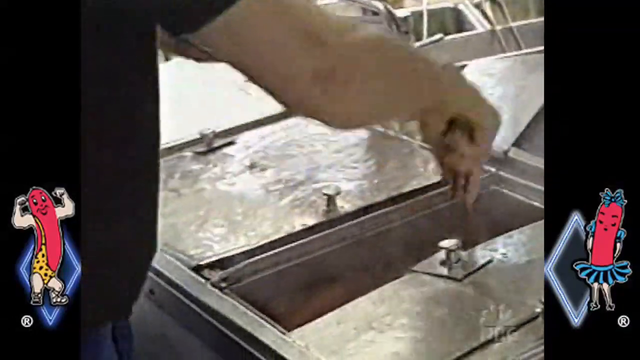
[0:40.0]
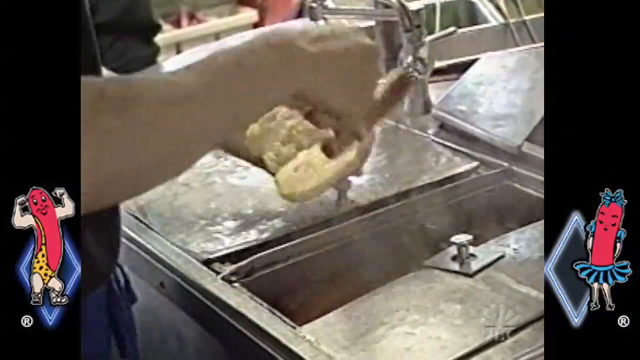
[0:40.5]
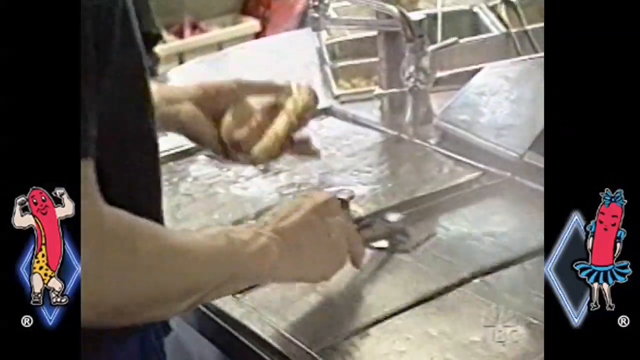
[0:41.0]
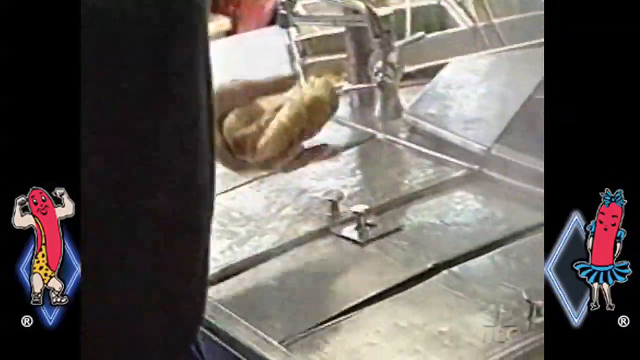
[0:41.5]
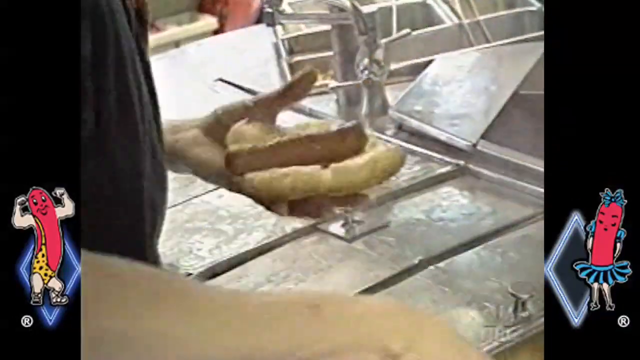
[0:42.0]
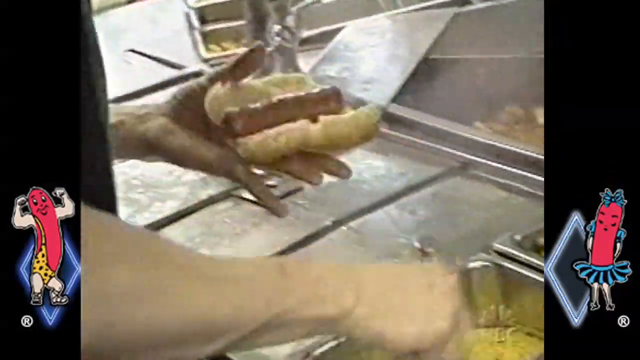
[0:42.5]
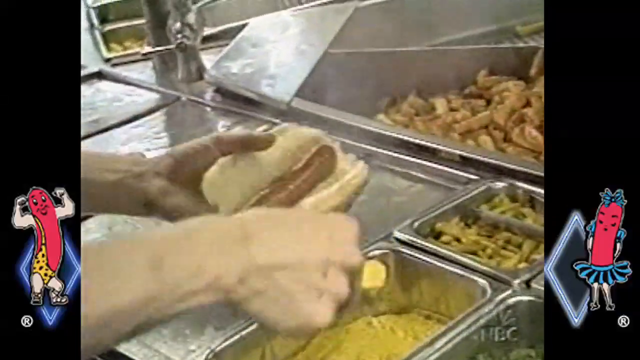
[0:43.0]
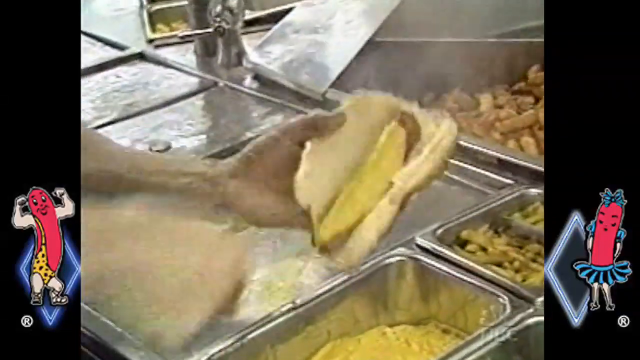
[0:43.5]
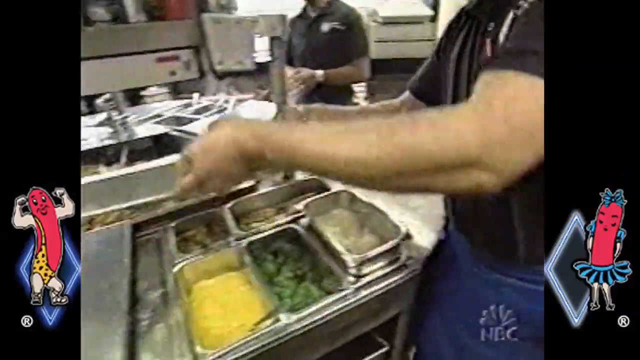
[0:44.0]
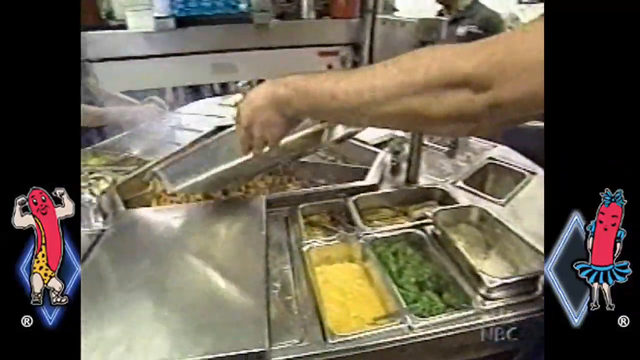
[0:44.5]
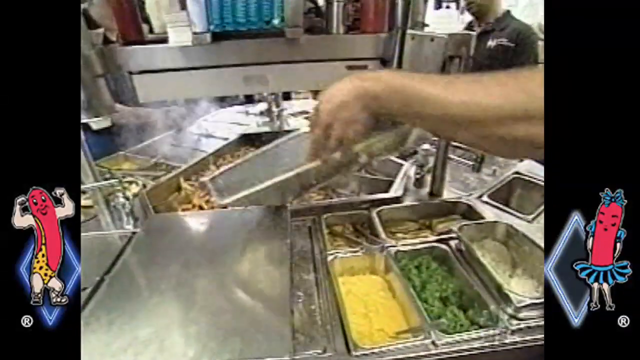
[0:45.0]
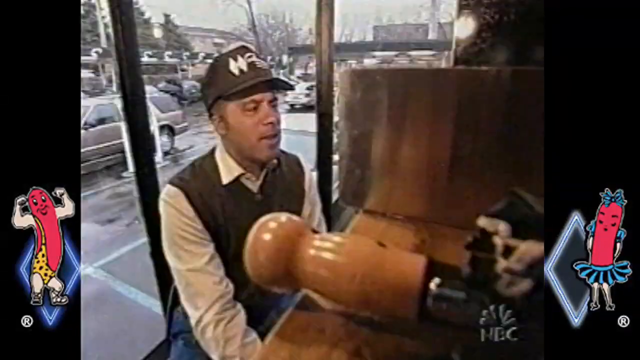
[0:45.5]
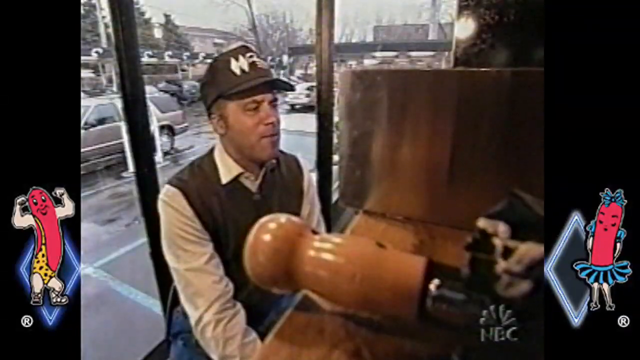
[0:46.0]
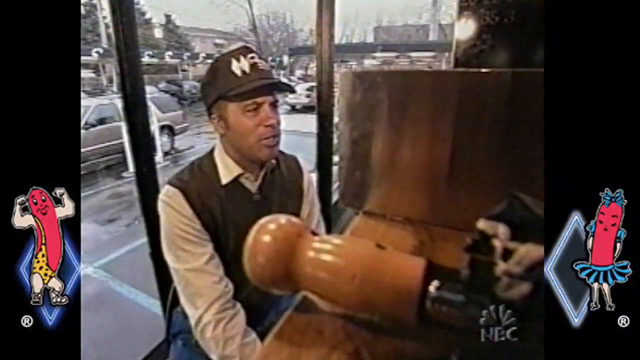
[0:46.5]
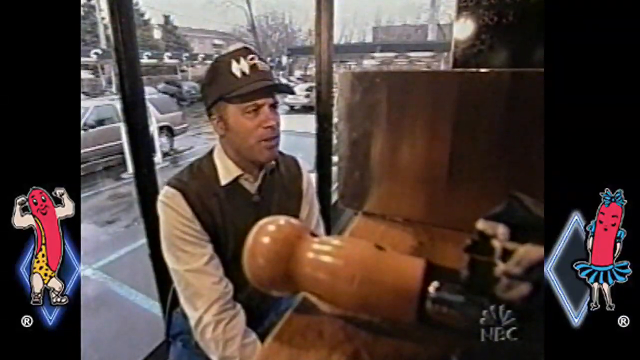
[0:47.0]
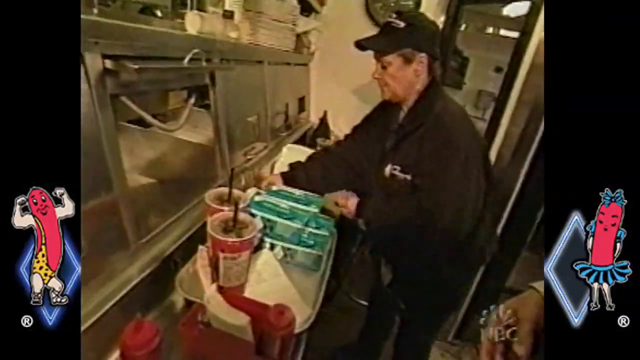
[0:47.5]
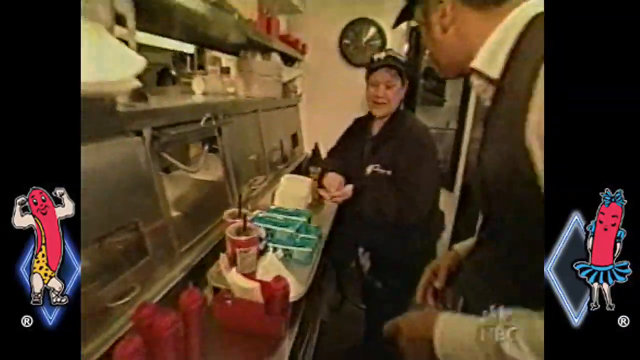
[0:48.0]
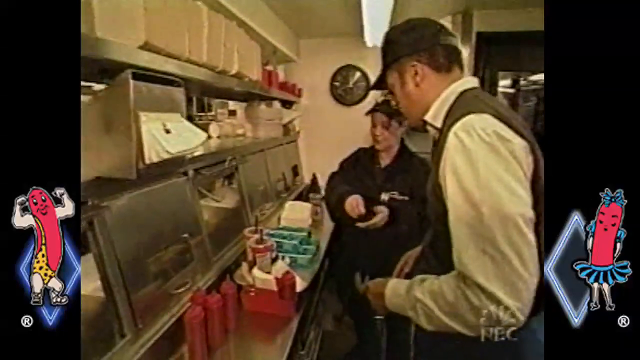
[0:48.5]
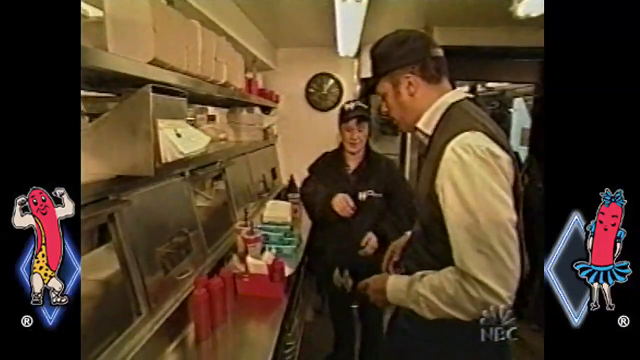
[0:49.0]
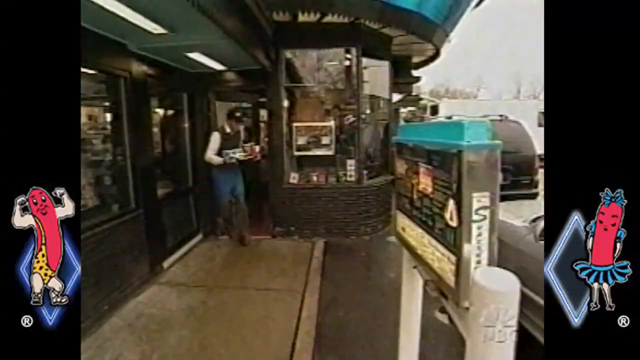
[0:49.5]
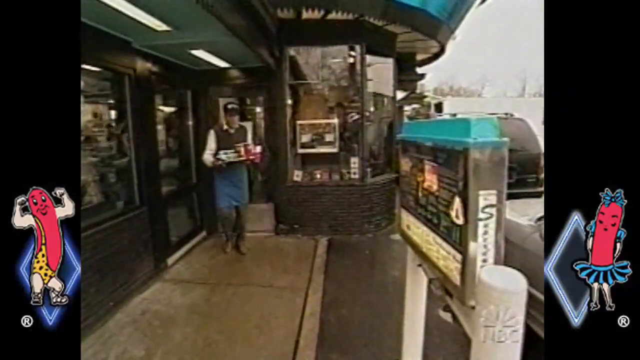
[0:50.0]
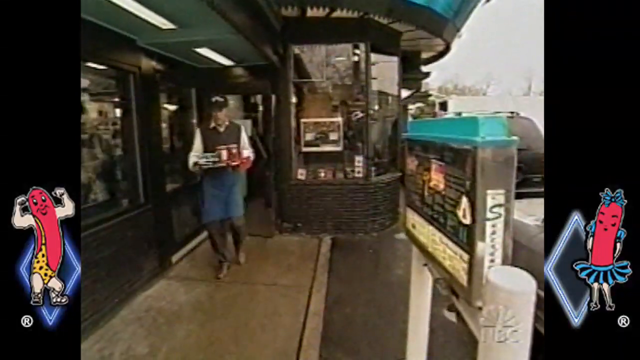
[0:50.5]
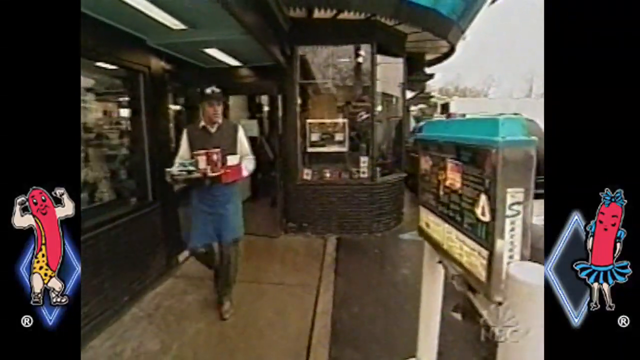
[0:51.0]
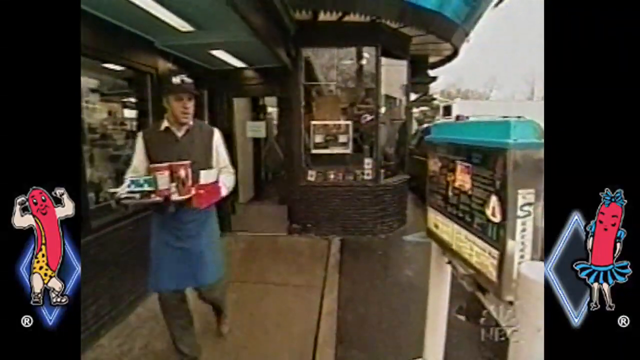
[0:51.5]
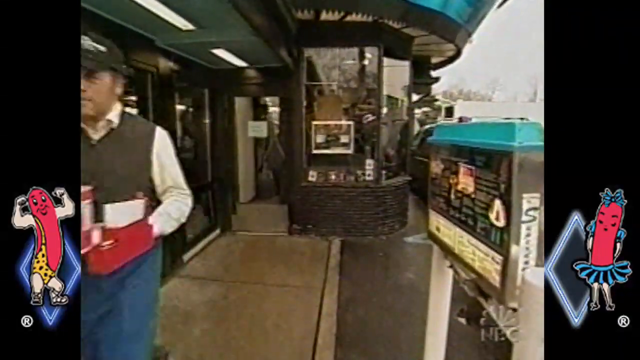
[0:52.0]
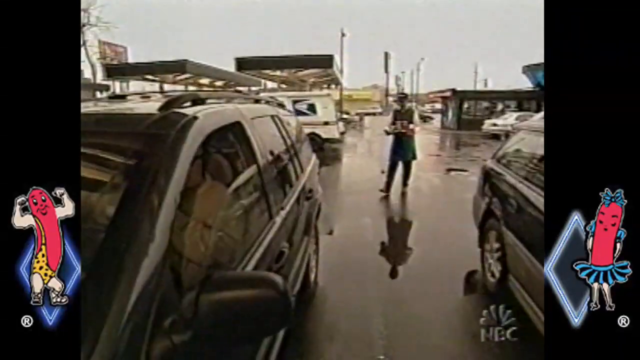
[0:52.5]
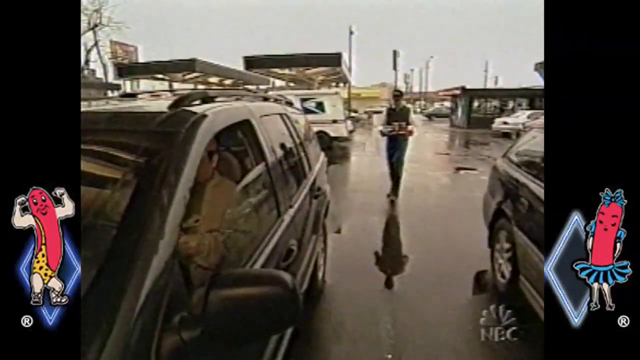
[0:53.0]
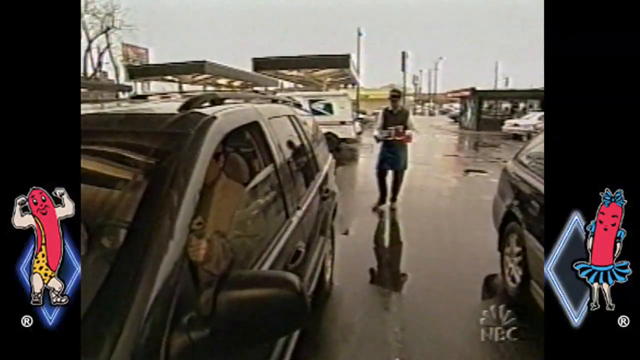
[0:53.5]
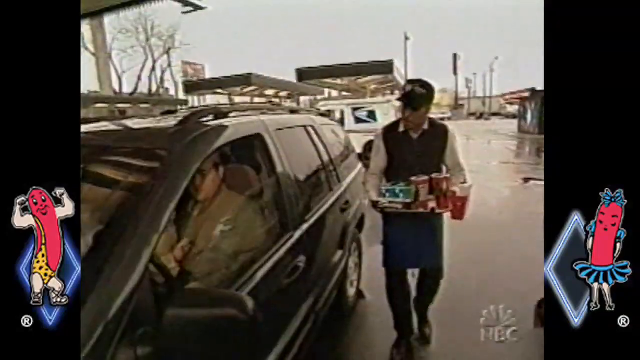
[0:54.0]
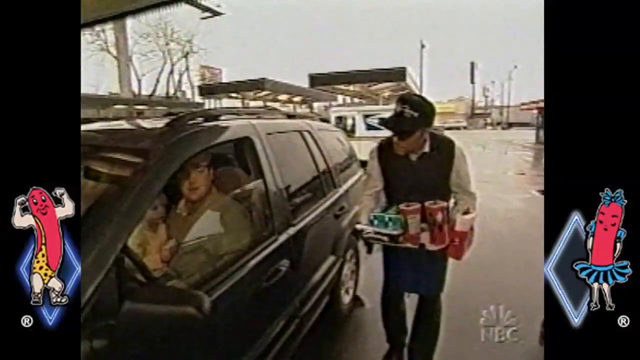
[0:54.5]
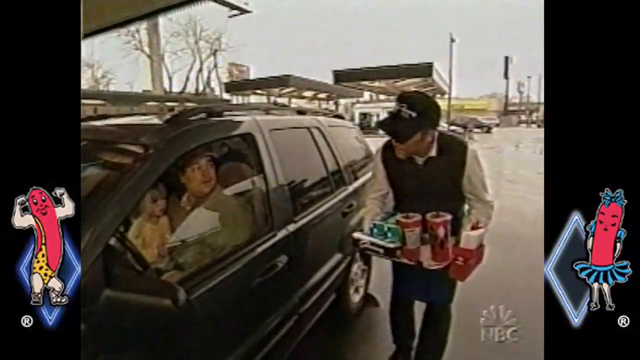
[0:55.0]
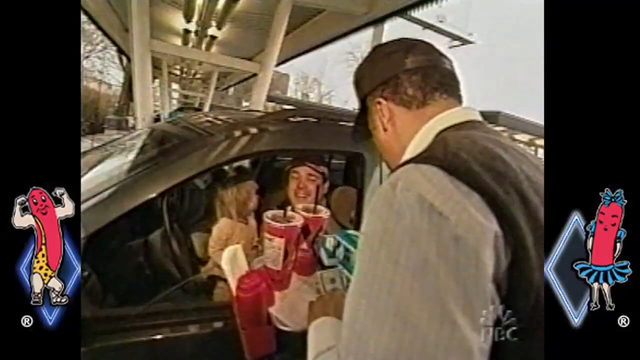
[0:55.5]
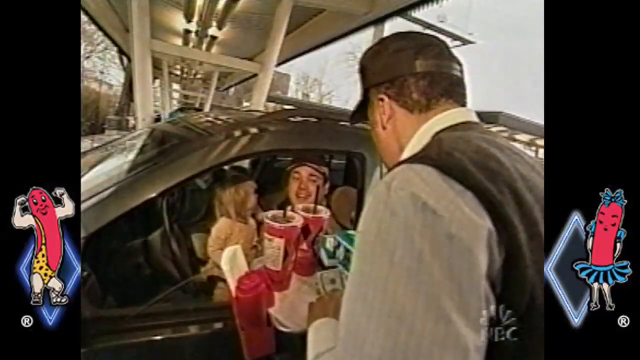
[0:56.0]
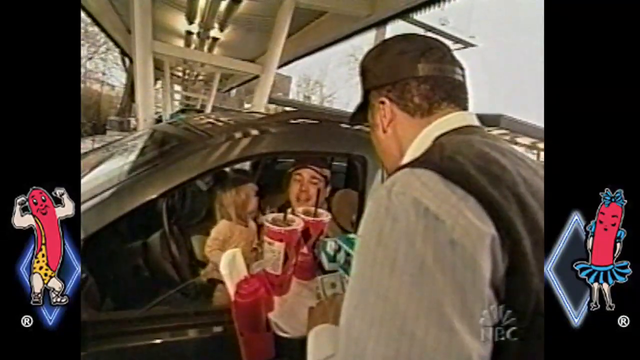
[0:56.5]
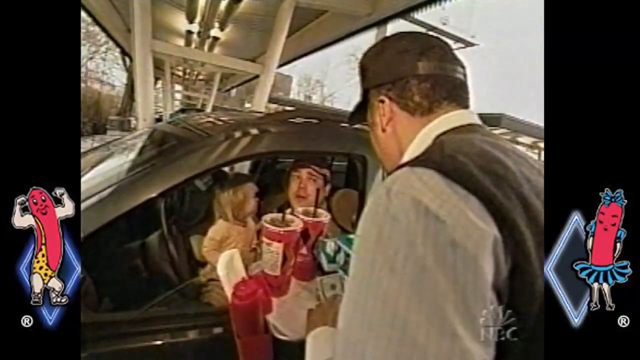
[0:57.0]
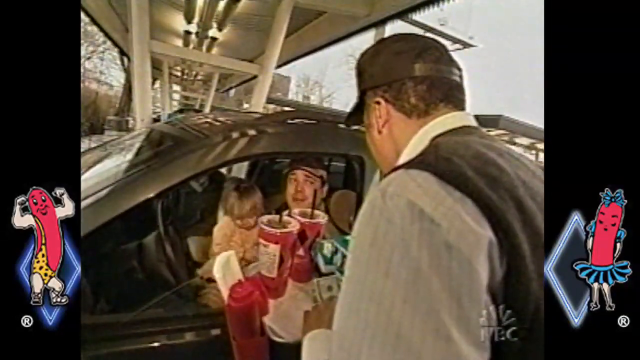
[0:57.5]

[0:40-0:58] A man takes a hot dog out with the tongs and puts it on a bun, then dips a spoon in what appears to be mustard and splashes it on the hot dog. Someone dumps a pan of fries into a bigger serving pan. The man in the white dress shirt with the cardigan and black hat talks. The woman who took an order out earlier talks to the man in the dress shirt. On the counter are two drinks and two to four folded-up boxes with stuff in them, three ketchup containers are on the side, and a clock is against the wall. The man then exits the building wearing slacks, dress shoes and a blue apron, carrying a tray of food and drinks, and takes them to a car. In the car is a clean-shaven white Caucasian man with a hat, with what appears to be his daughter next to him, probably about four or five years old, with blonde hair. On the tray are the ketchup containers, two drinks, some money and part of the folded-up containers.